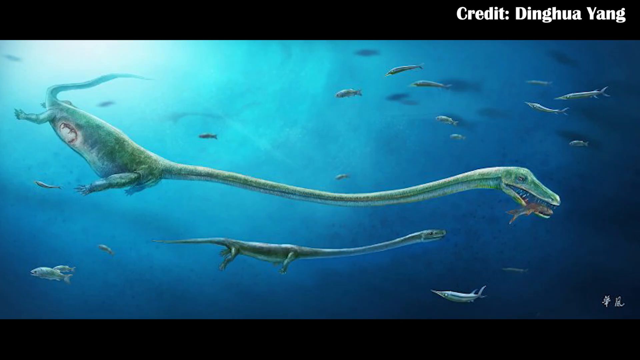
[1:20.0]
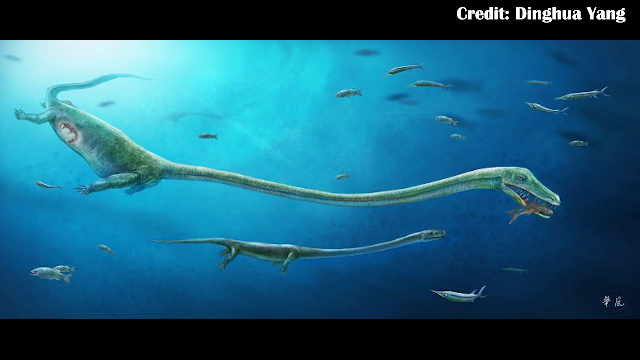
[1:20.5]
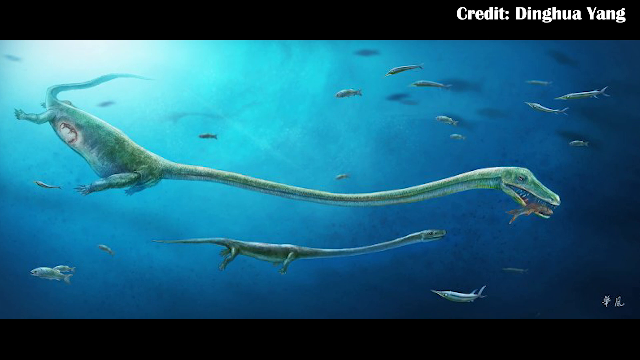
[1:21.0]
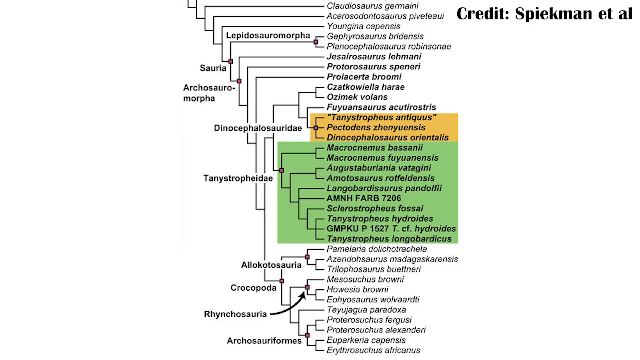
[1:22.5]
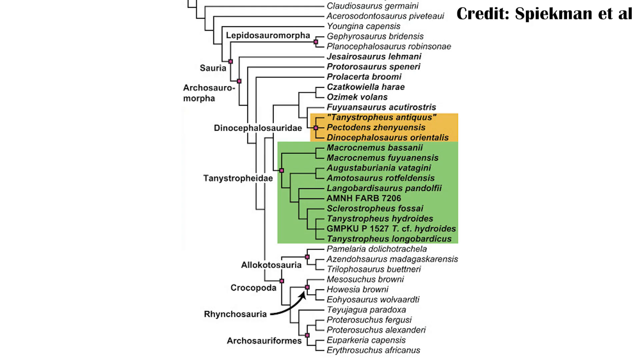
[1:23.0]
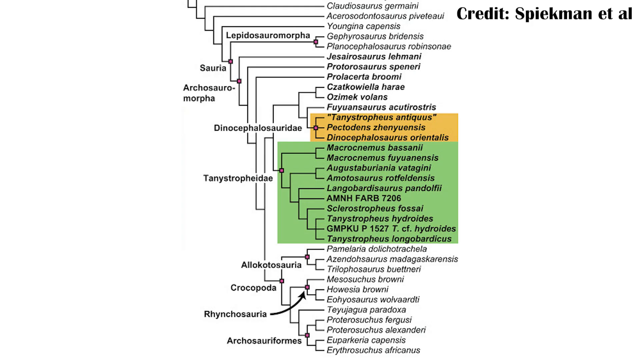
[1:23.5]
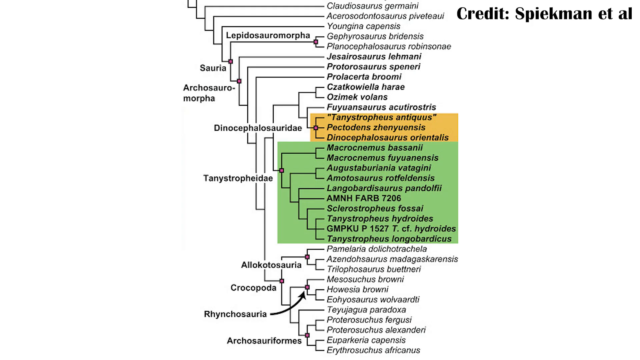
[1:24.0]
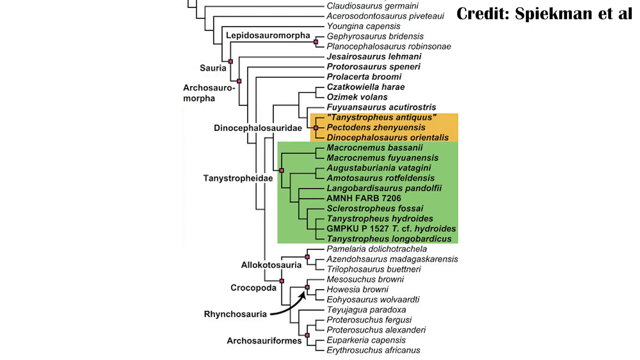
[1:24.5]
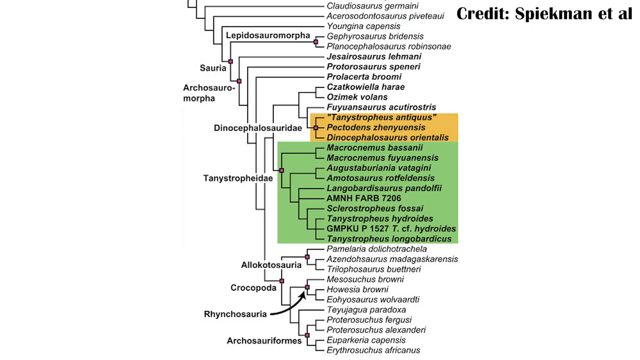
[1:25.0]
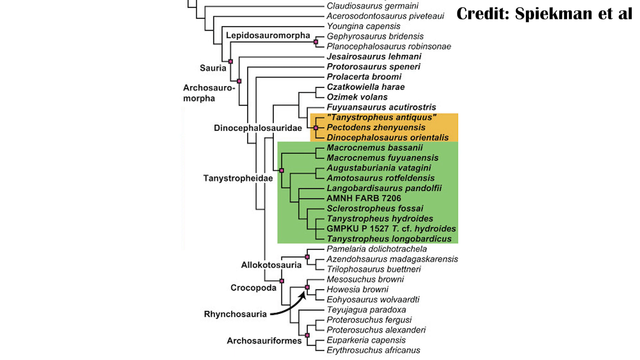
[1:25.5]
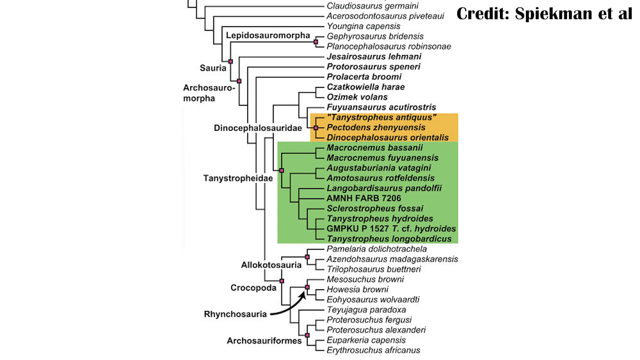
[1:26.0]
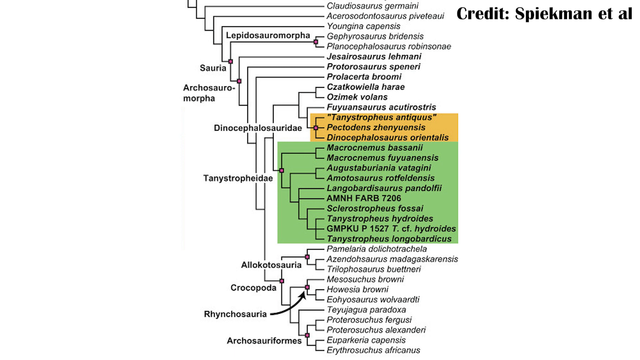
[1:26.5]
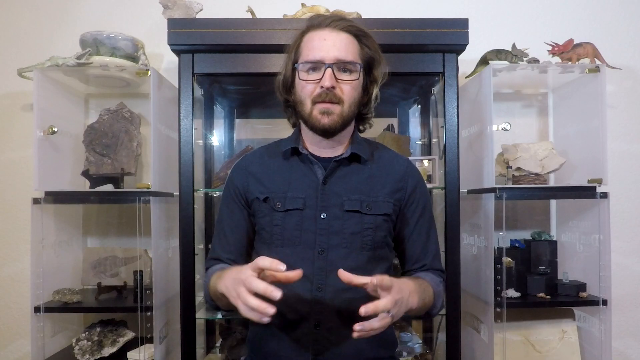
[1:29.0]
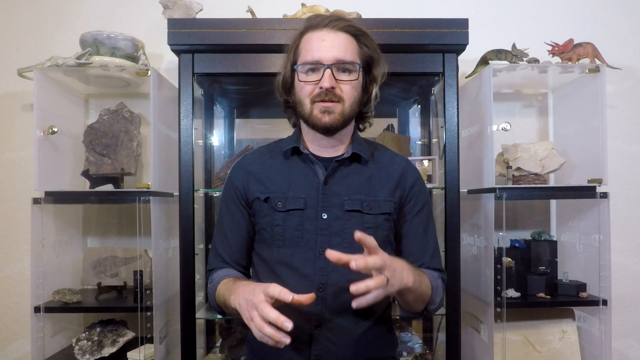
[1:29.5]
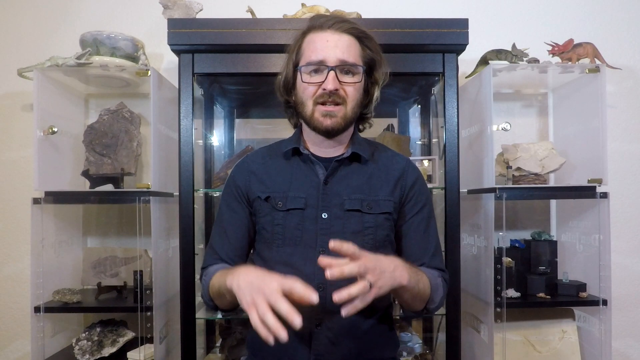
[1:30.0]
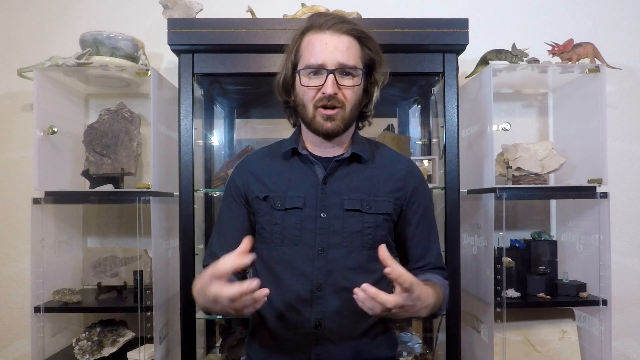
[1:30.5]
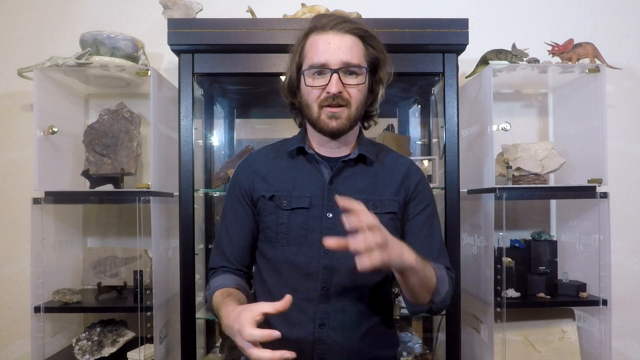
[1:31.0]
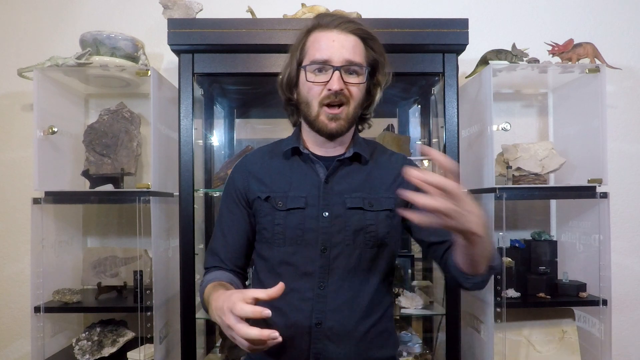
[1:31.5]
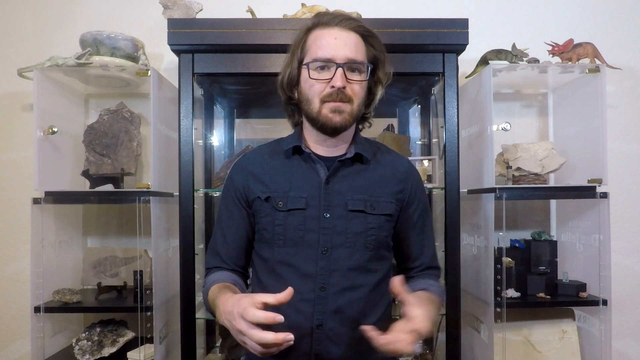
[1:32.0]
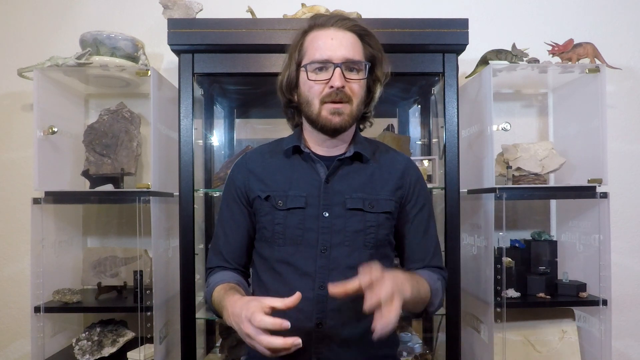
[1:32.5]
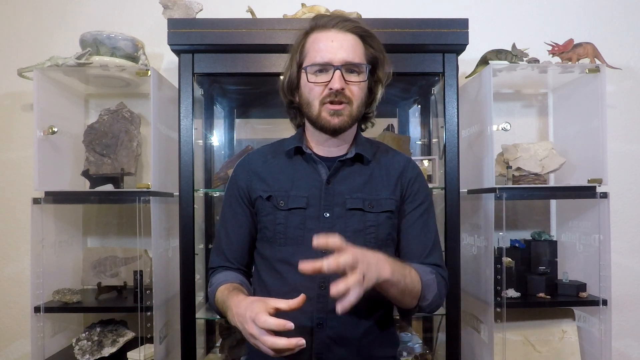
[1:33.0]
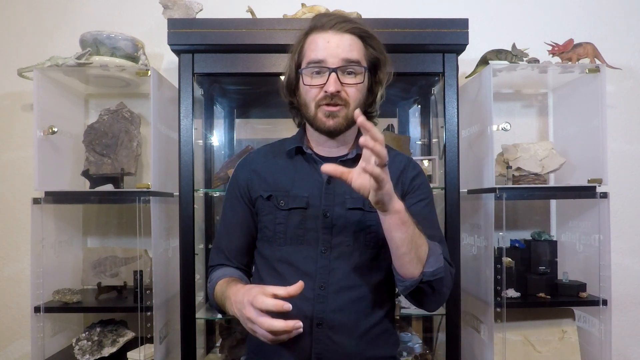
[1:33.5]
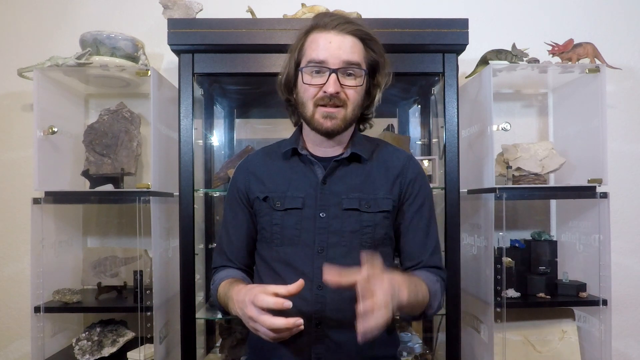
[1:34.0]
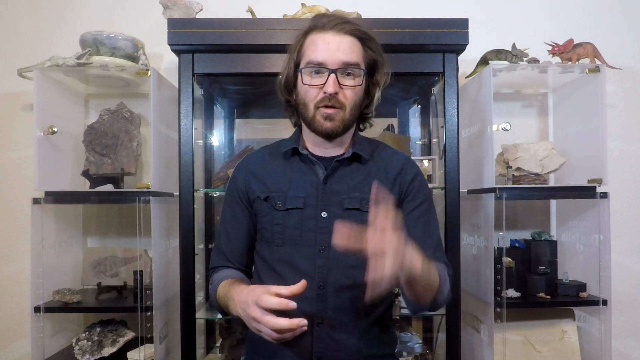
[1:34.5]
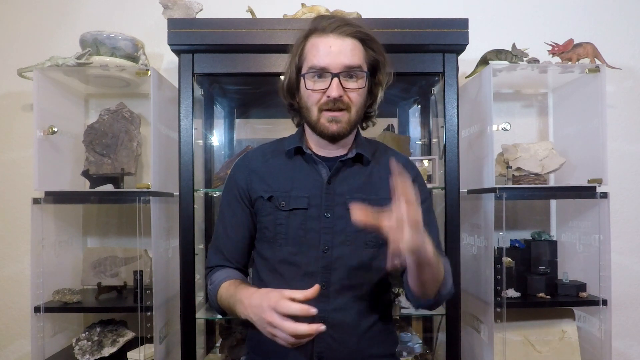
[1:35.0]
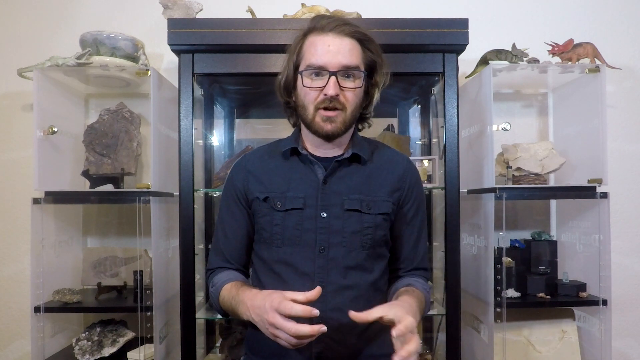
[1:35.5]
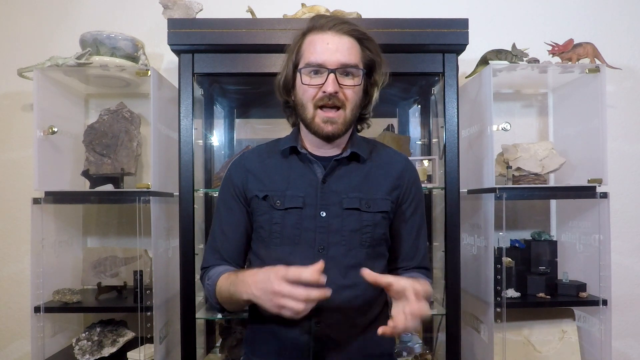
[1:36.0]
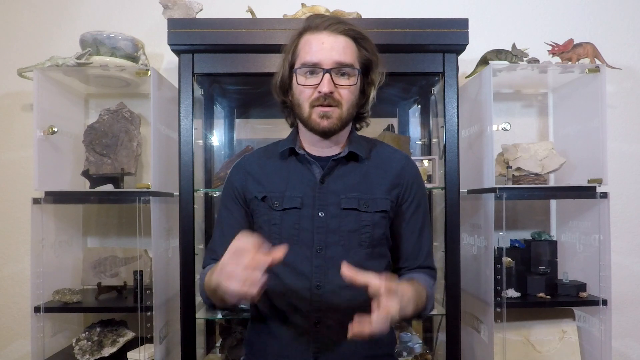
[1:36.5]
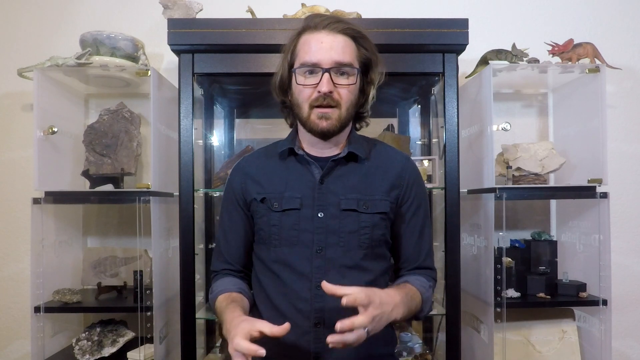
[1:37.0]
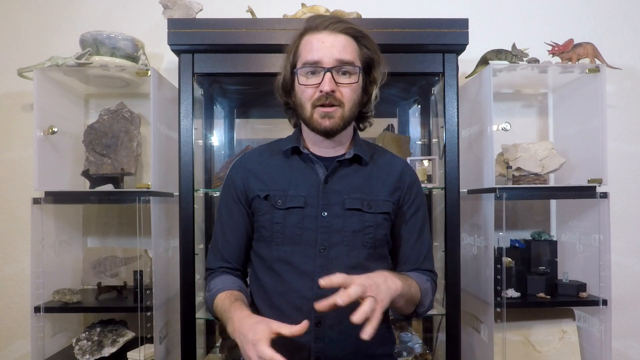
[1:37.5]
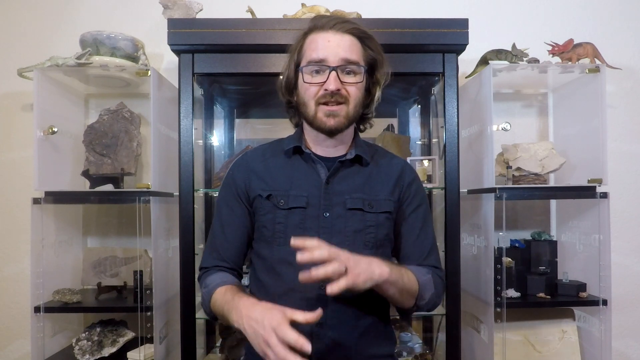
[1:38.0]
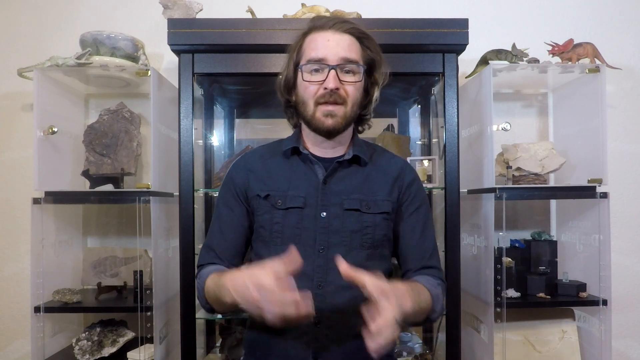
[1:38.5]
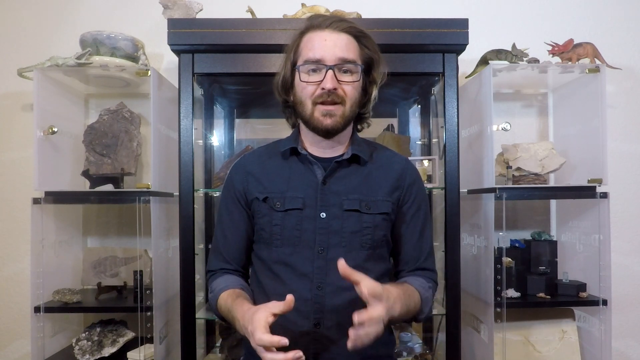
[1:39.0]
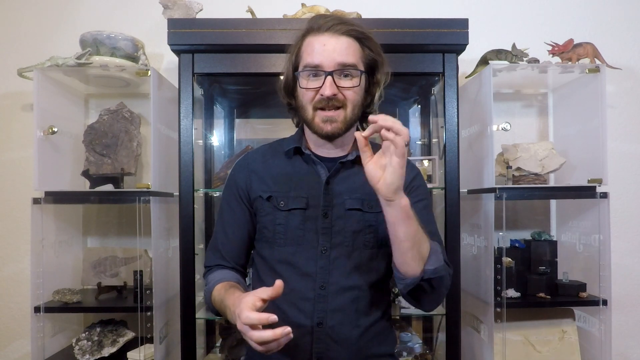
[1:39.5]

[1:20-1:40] The same chart returns with the same highlighted sections: the mustard yellow box with three names and, right below it, the second highlighted section in green with 11 names, both from the same main line, "Dinocephalosauridae". It stays on screen for maybe five seconds before the video returns to the host. He is still speaking to the camera, and his hand gestures are now wider, more emphatic and more varied: at one point he makes an okay sign, and he makes sweeping motions with his left hand. The background is unchanged.